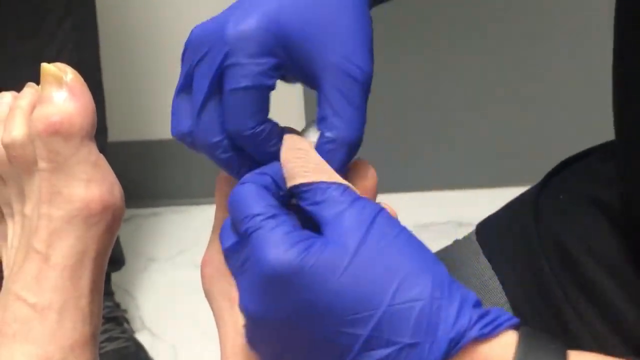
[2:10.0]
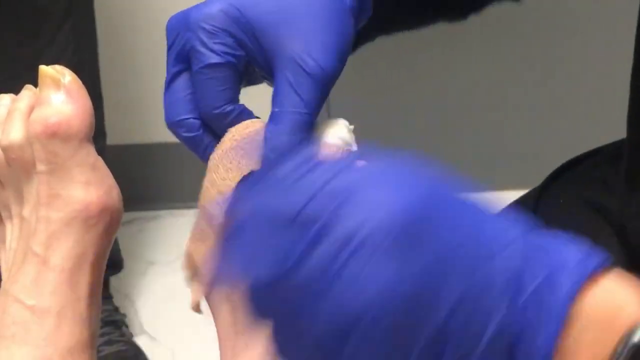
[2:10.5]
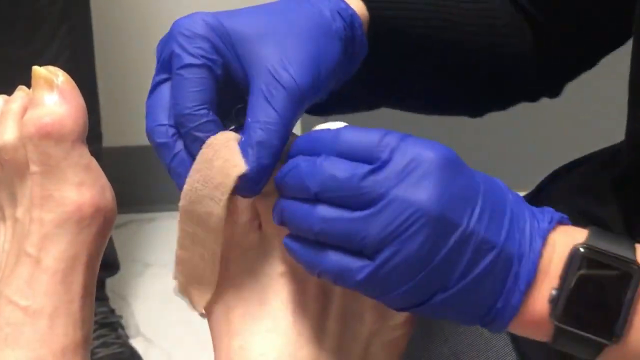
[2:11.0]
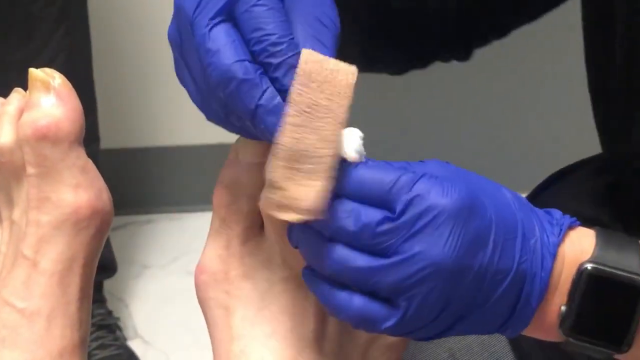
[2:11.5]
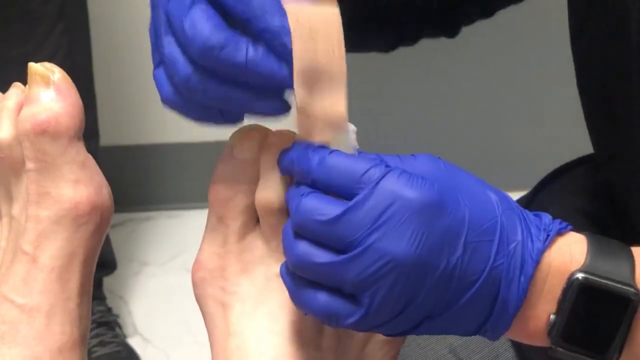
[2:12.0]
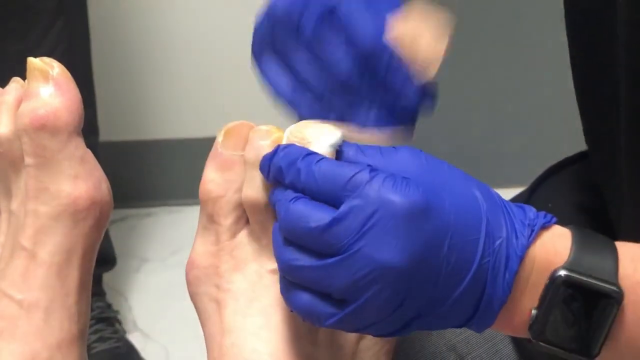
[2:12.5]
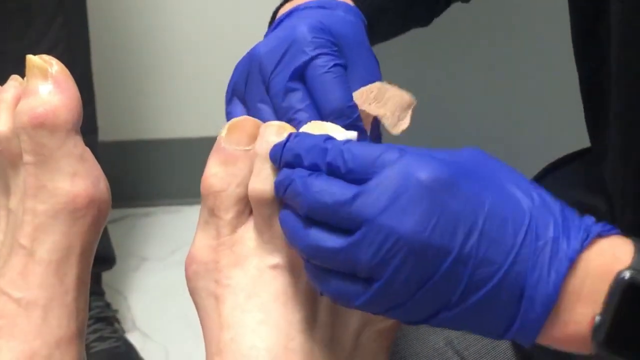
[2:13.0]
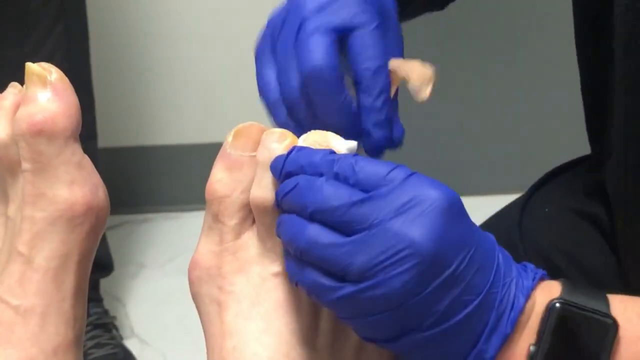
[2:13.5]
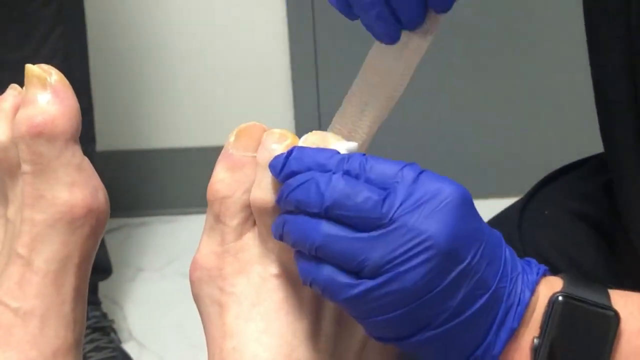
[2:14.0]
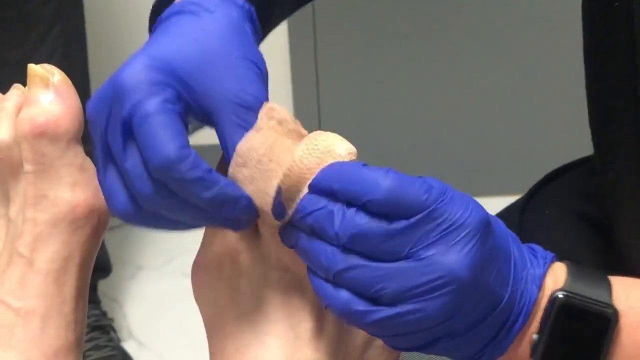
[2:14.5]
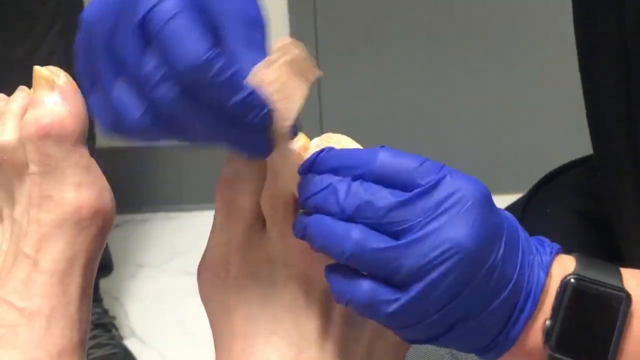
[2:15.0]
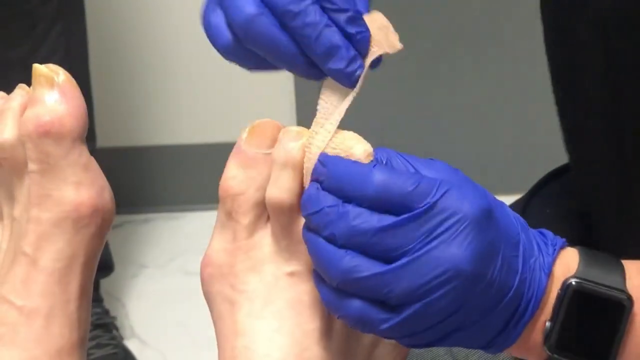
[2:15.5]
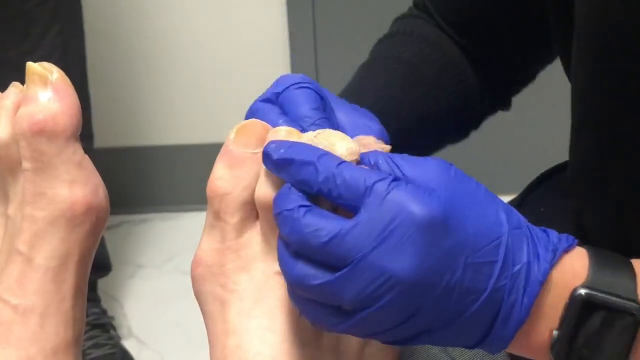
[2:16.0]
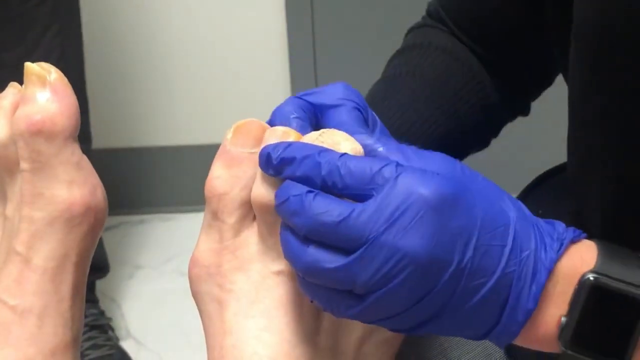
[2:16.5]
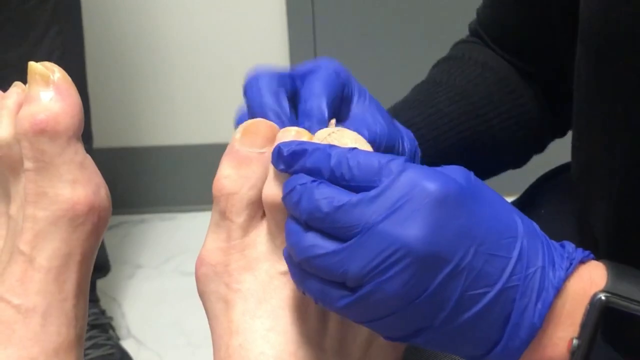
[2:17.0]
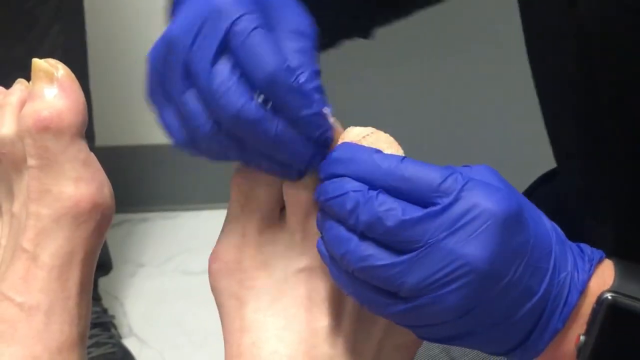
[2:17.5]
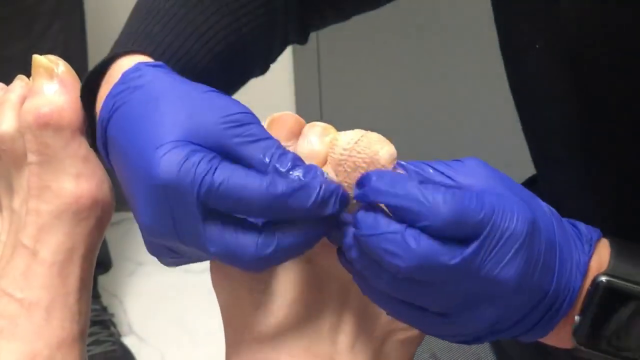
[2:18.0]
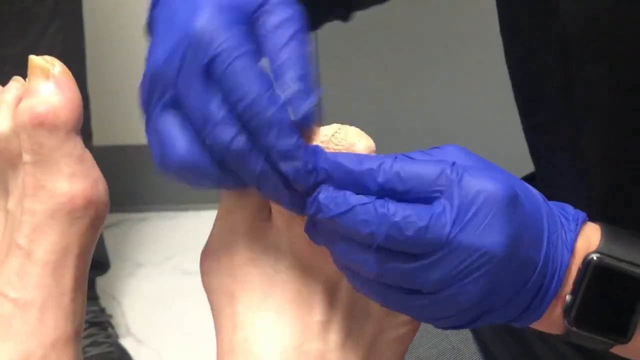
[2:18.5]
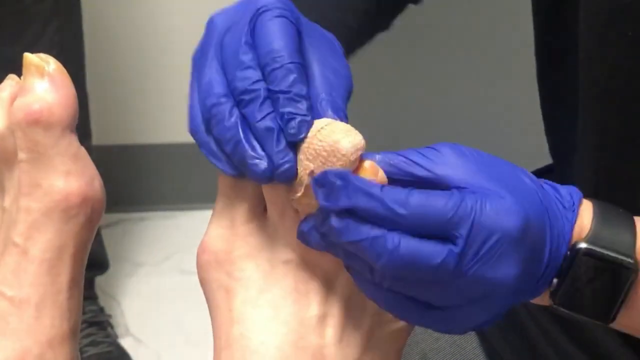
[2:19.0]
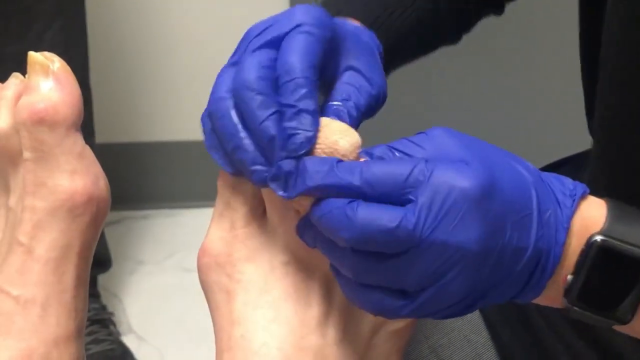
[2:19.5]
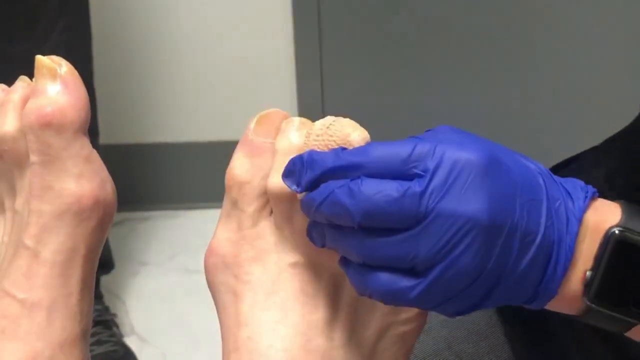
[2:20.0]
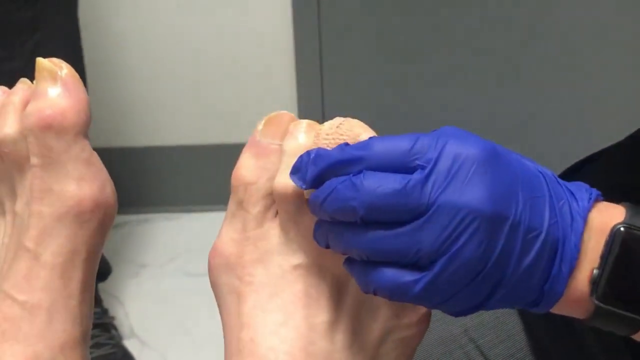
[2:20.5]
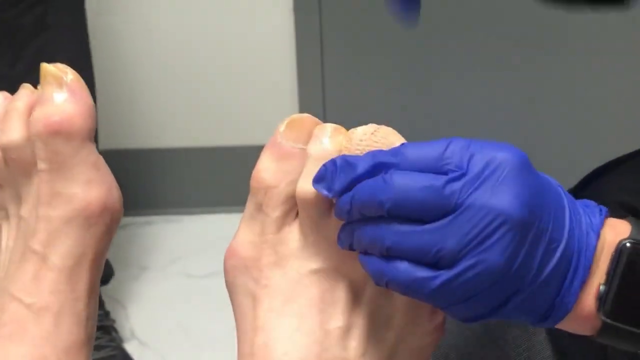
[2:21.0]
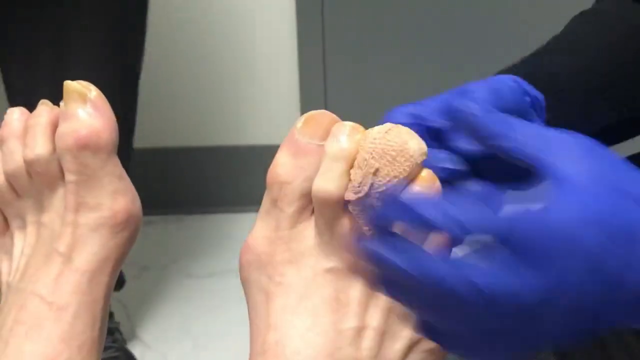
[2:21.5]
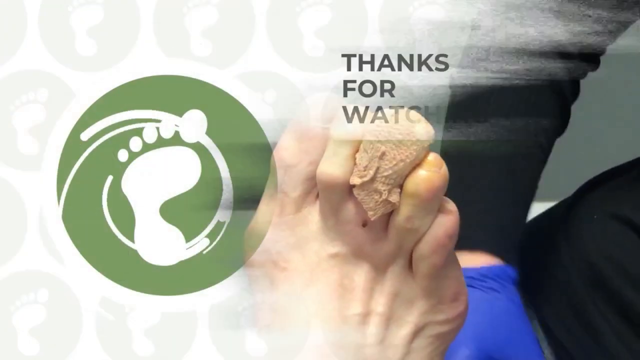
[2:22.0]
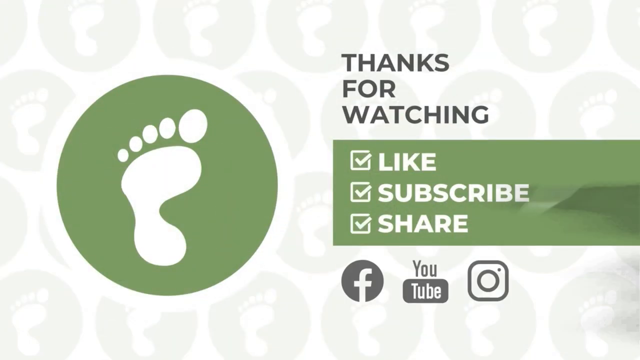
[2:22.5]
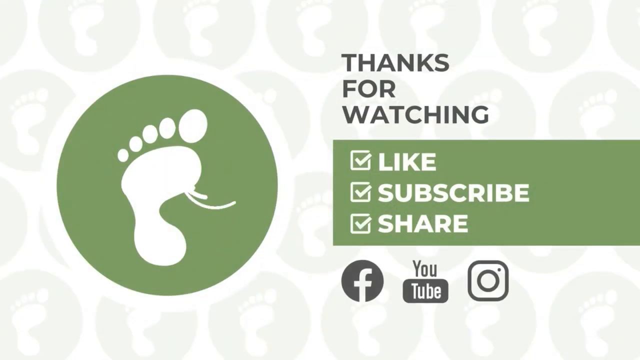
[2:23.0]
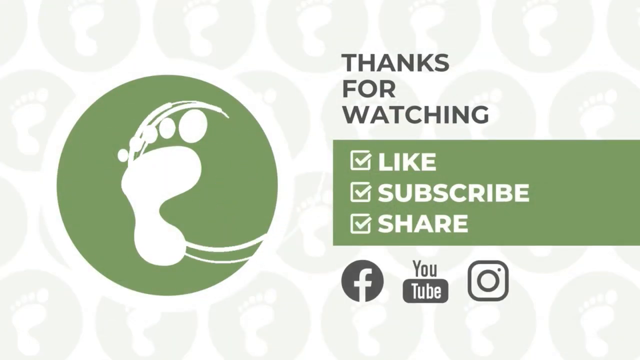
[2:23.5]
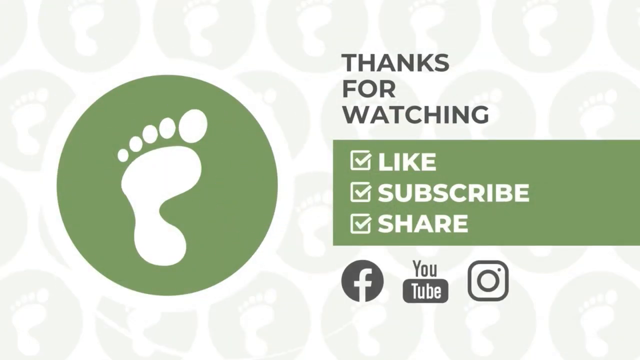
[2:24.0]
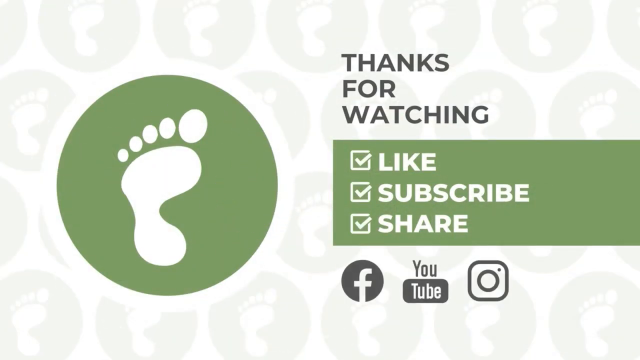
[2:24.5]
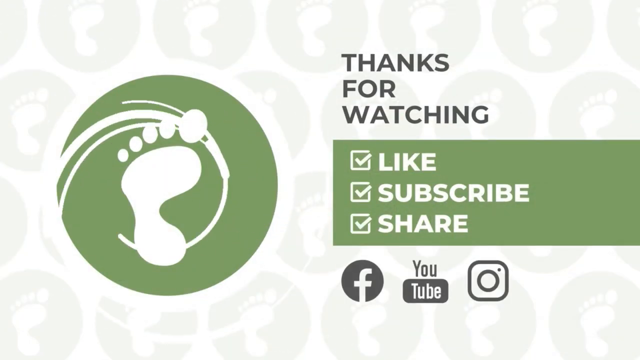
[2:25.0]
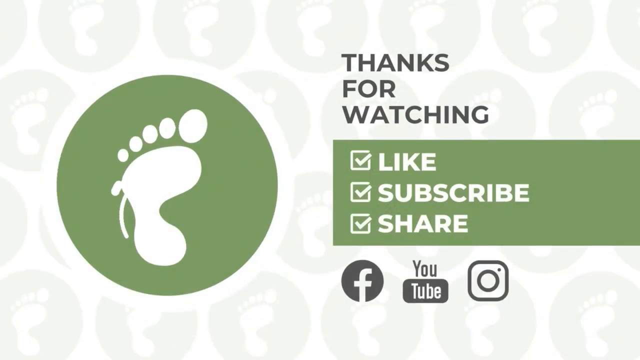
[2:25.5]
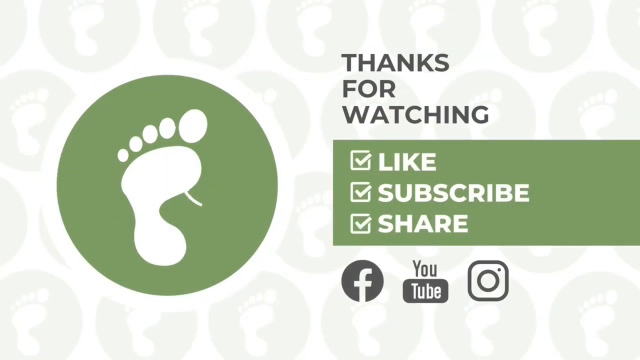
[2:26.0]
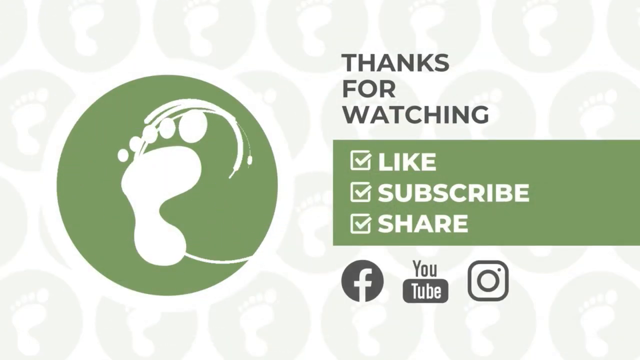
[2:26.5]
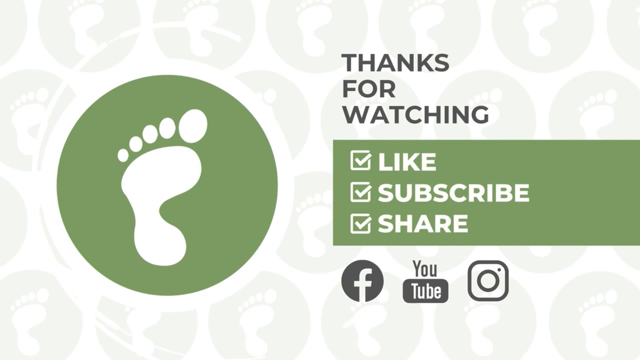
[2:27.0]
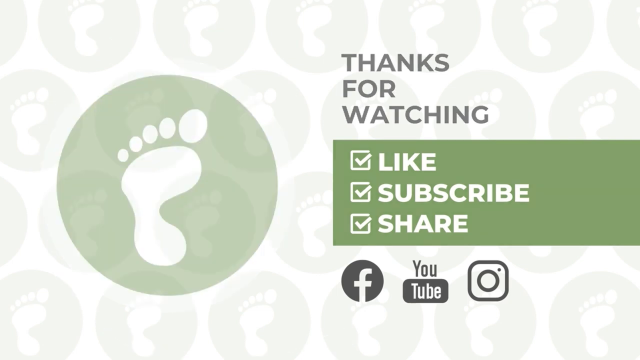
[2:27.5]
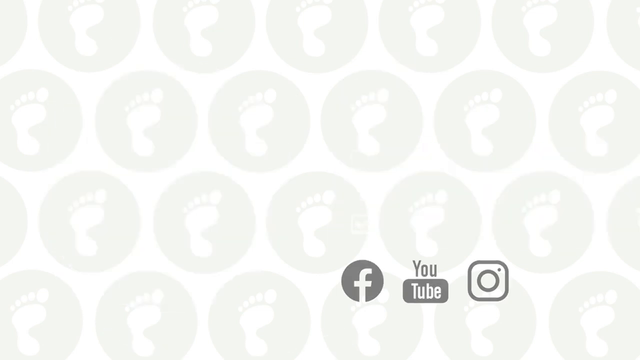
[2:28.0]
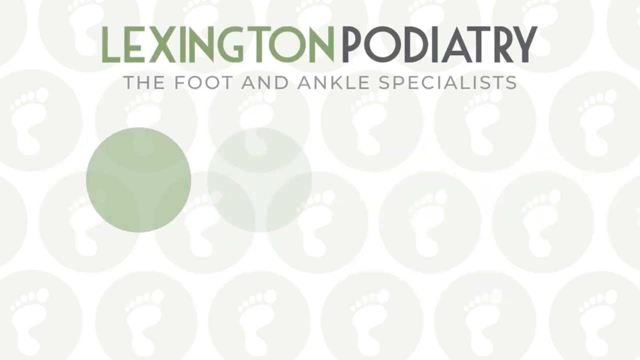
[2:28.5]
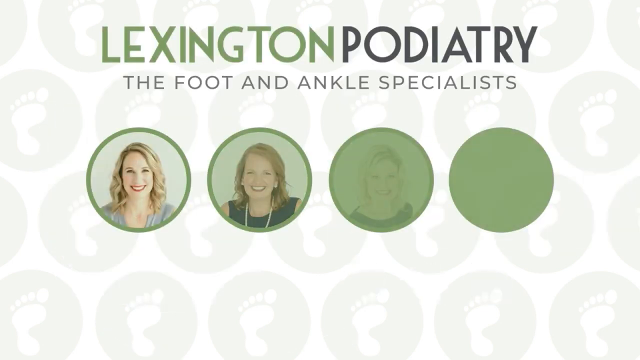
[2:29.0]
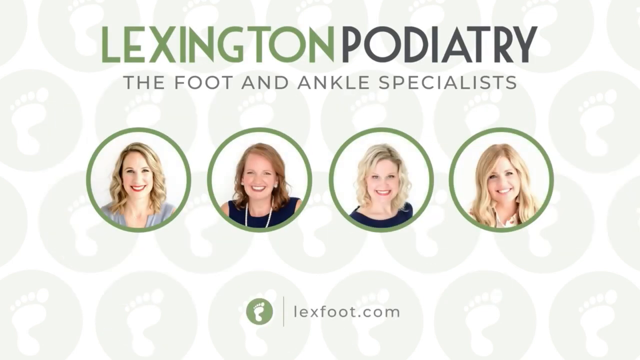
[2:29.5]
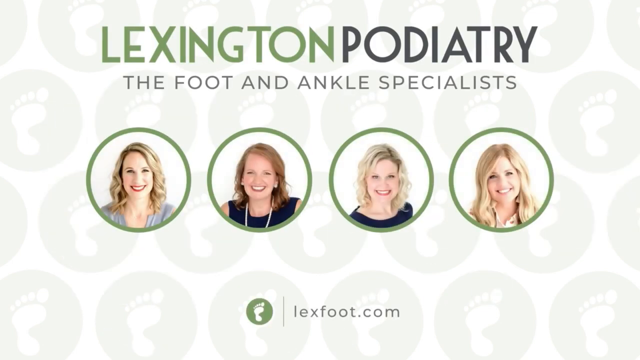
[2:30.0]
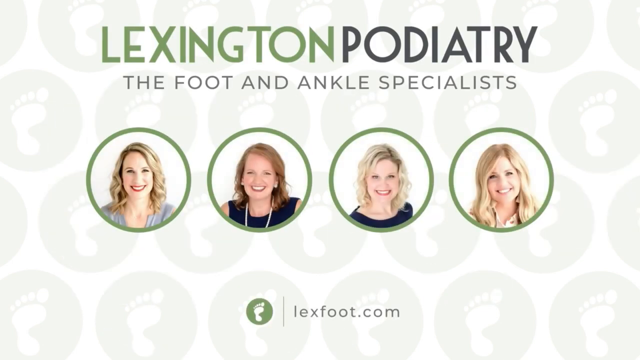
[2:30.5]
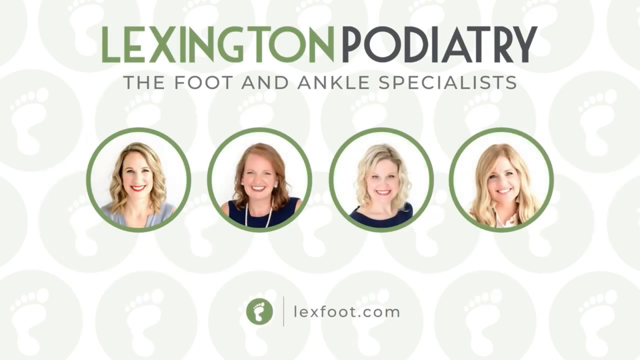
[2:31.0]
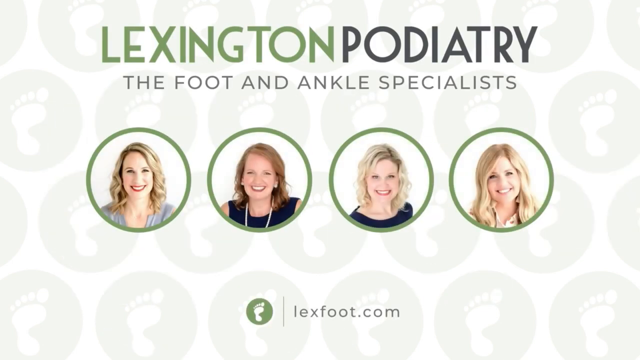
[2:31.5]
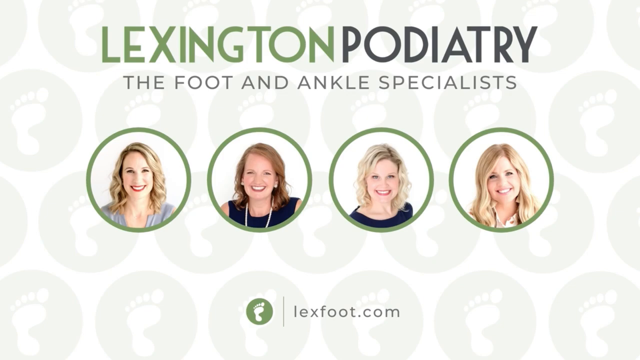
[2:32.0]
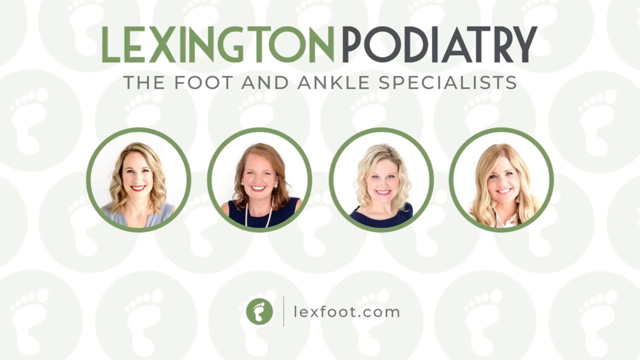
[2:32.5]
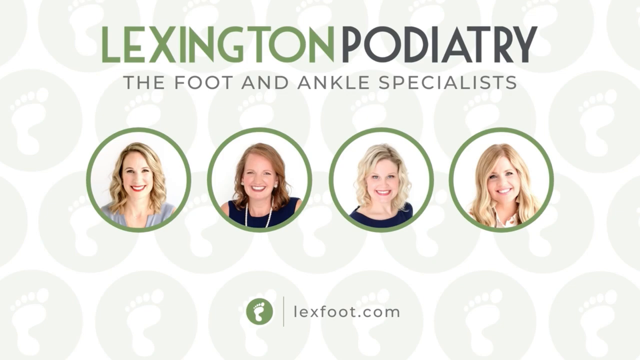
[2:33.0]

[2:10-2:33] The lady wearing all black with dark blue gloves continues wrapping beige medical tape around the middle toe that has the gauze on it, going around in a circle. As the tape nears its end, she brings it from the back of the foot to the front and uses the last piece to circle around. The gauze is now almost invisible; only the medical tape around the entire foot shows. The scene is then replaced by the company's logo, a green circle with a white foot in it, and the text "Thanks for watching." Below is a green rectangle with white text that seems to say "subscribe and share," with a box with a checkmark by each. At the bottom are links for their Facebook page, YouTube page and Instagram page.